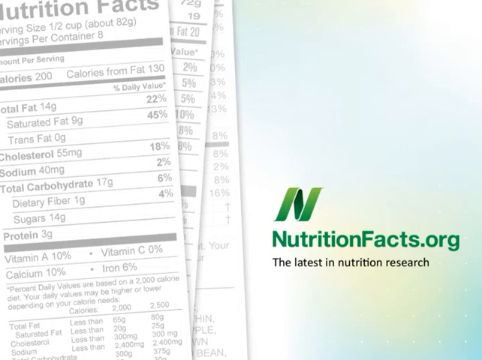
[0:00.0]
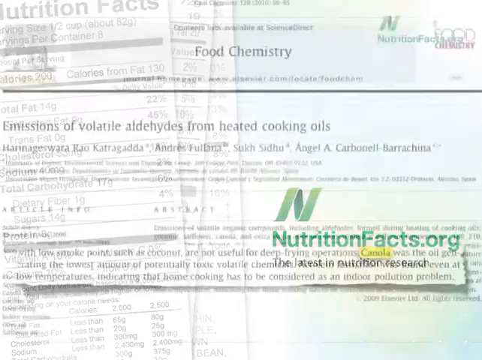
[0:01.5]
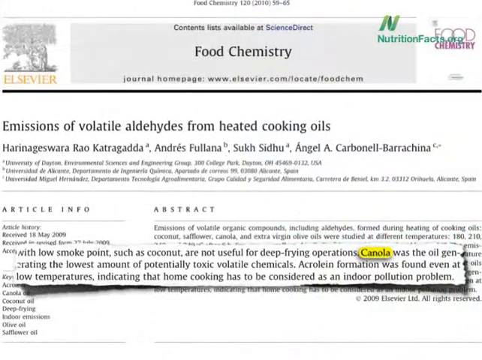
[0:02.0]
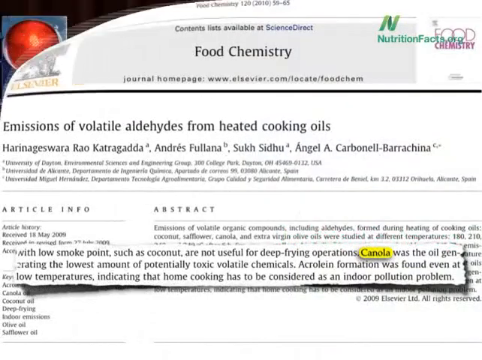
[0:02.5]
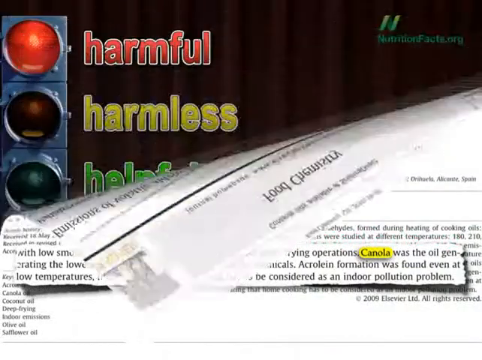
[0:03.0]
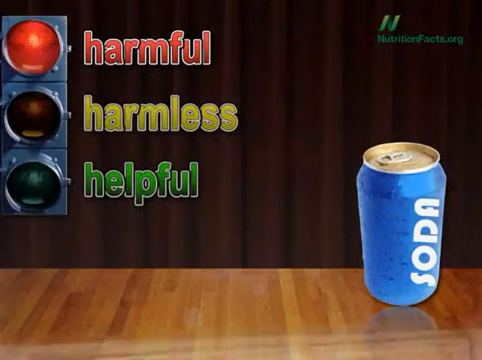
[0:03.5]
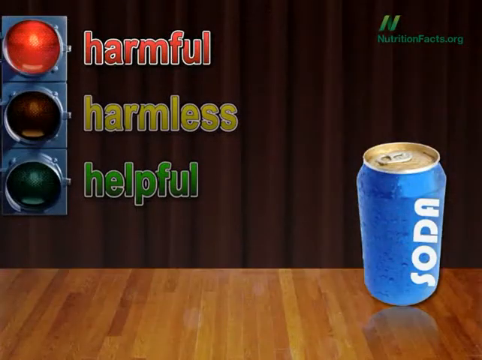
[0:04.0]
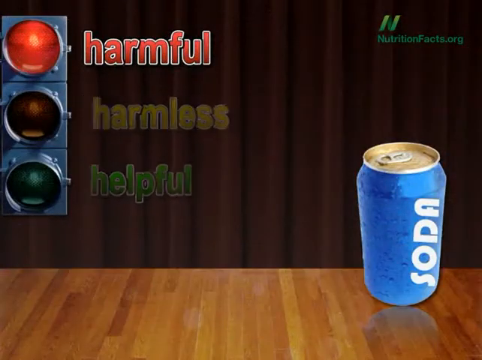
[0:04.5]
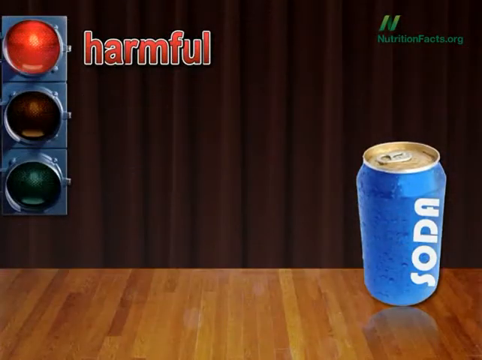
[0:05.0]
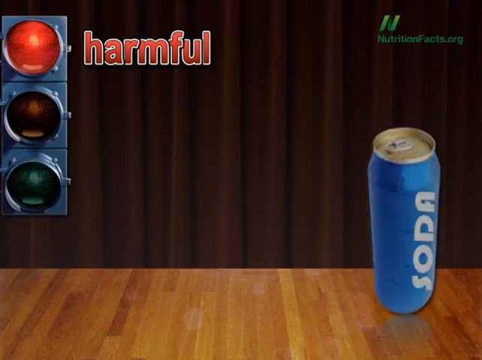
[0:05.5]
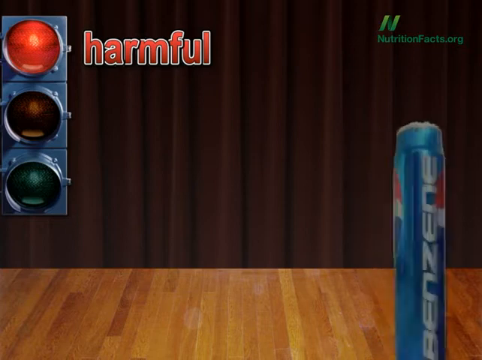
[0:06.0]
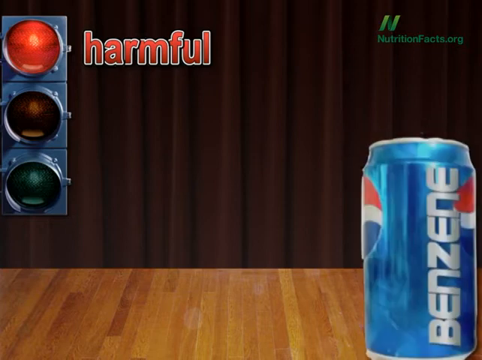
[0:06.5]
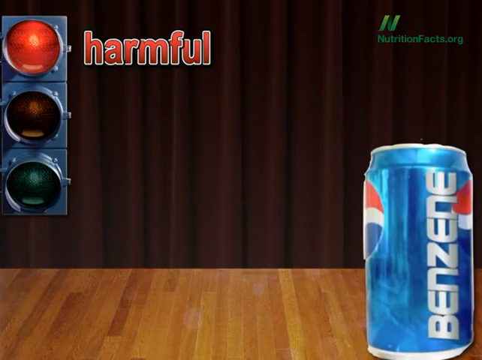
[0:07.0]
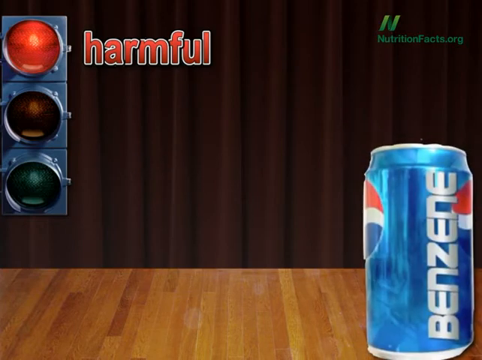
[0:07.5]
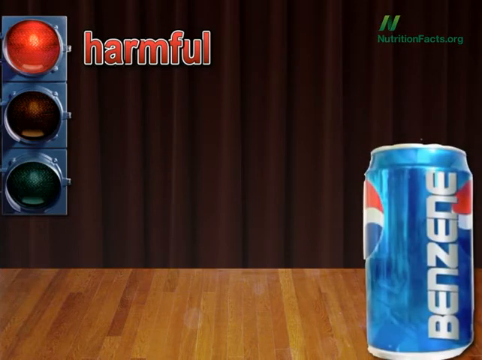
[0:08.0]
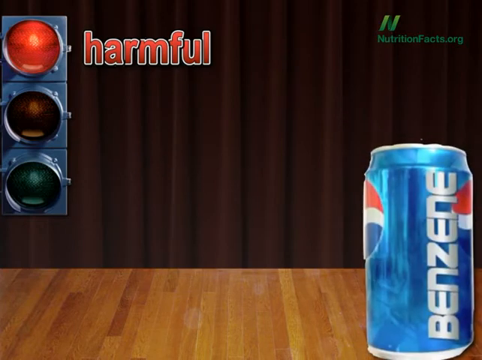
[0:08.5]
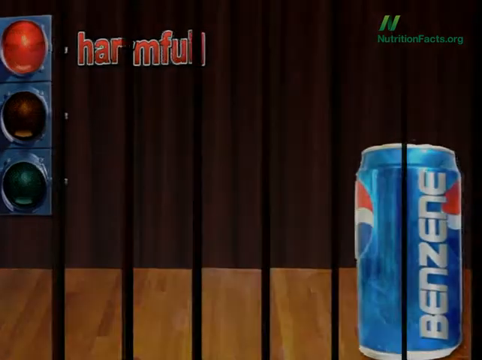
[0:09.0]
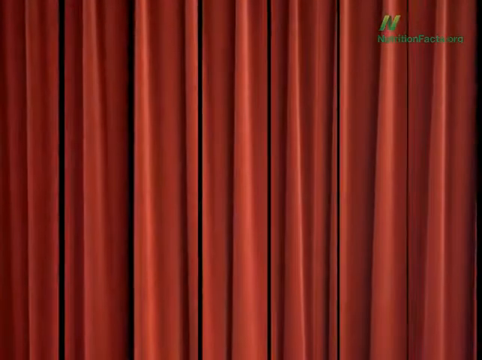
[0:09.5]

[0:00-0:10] The video opens with a title page reading "The Latest in Nutrition Research" from nutritionfacts.org, with a list of nutrition facts about food in grey on the left of the screen. An article about food chemistry then appears, titled "Emissions of Volatile Aldehydes from Heating Cooking Oils." A highlighted section at the bottom reads: "with low smoke, such as coconut, are not useful for deep frying operations. Canola was the oil generating the lowest amount of potentially toxic volatile chemicals. Acrolein formation was found even at low temperatures, indicating that home cooking has to be considered as an indoor pollution problem." The page folds over to show a traffic light on the left side of the screen with the red light showing and the caption "harmful" in red beside it. In the right corner of the screen, on top of a table, is a can of soda, so the red traffic light indicates that the soda is harmful. The can rotates to reveal a blue can of benzene, and then red curtains appear across the page.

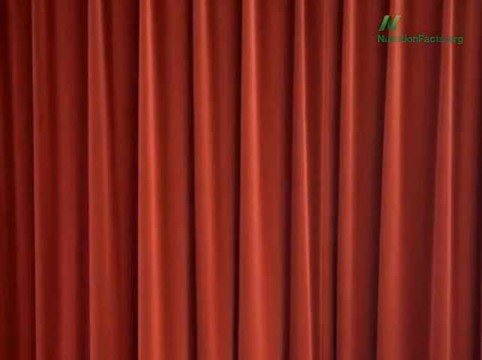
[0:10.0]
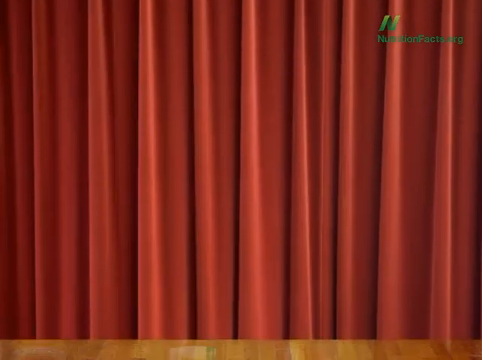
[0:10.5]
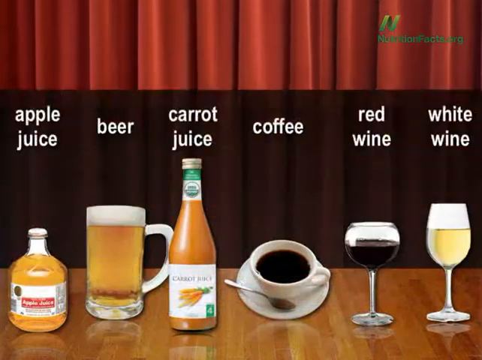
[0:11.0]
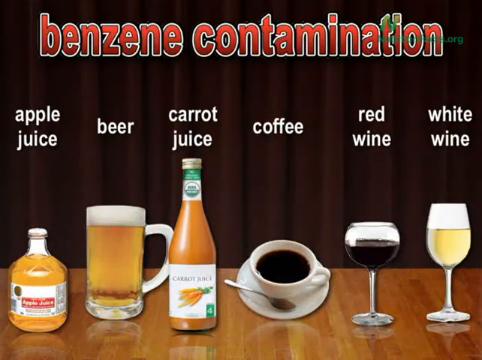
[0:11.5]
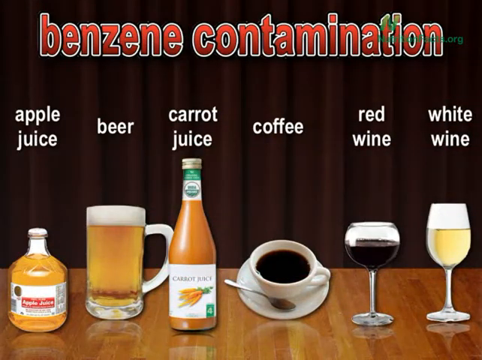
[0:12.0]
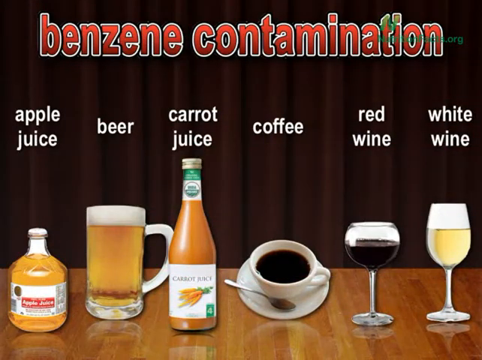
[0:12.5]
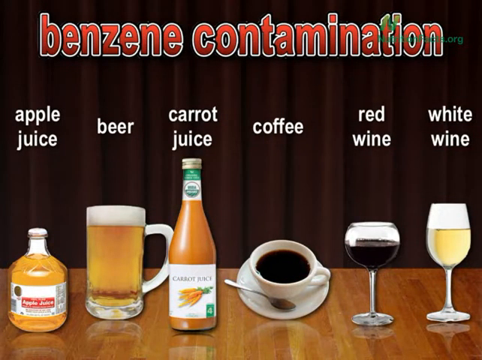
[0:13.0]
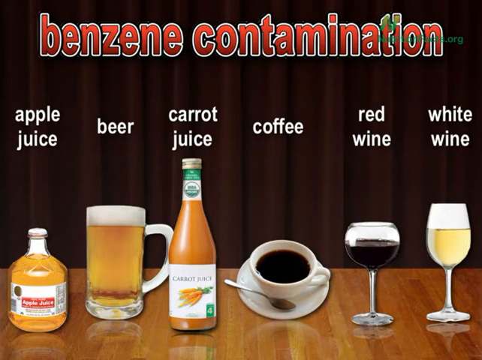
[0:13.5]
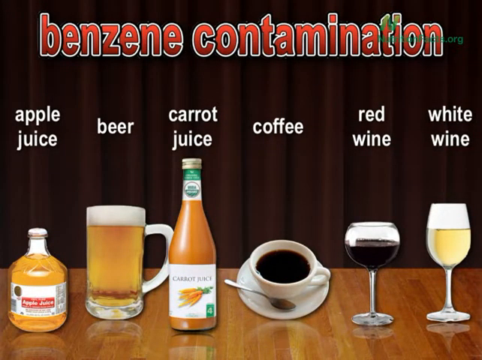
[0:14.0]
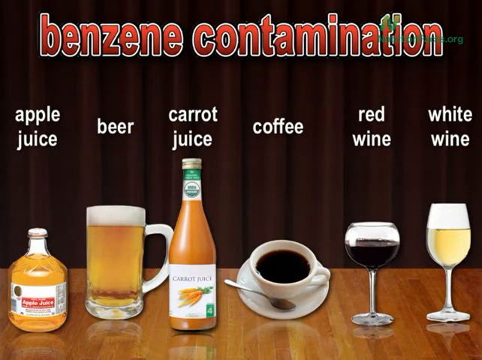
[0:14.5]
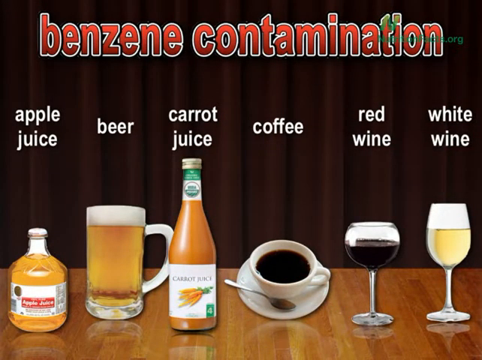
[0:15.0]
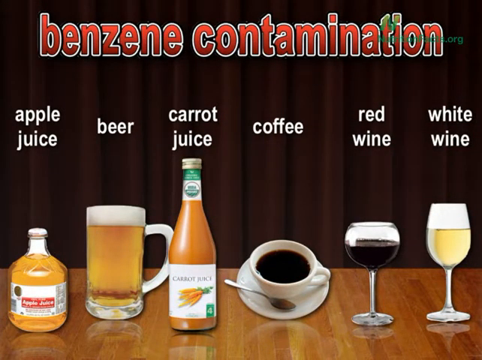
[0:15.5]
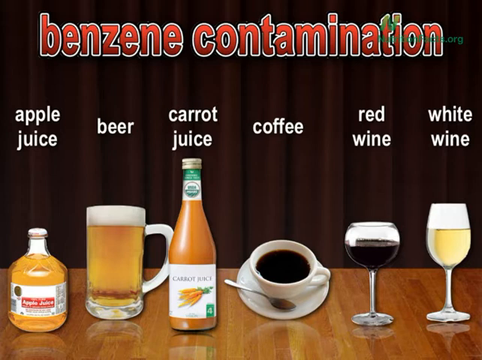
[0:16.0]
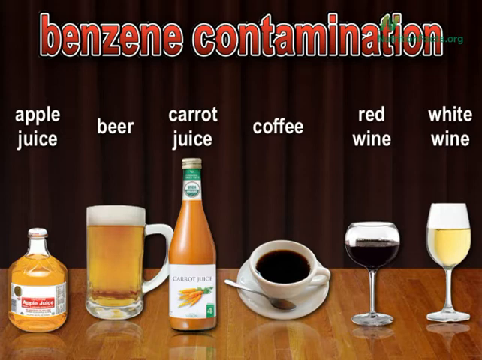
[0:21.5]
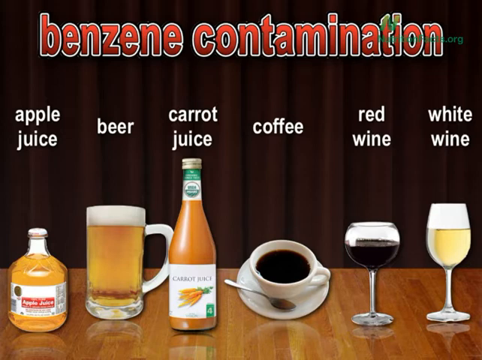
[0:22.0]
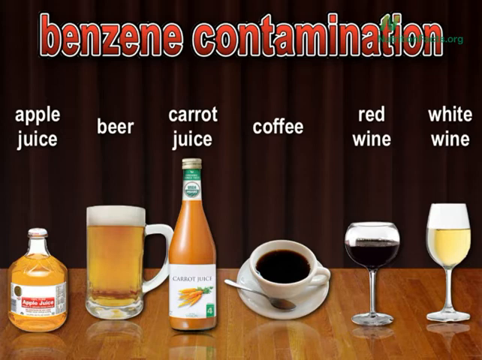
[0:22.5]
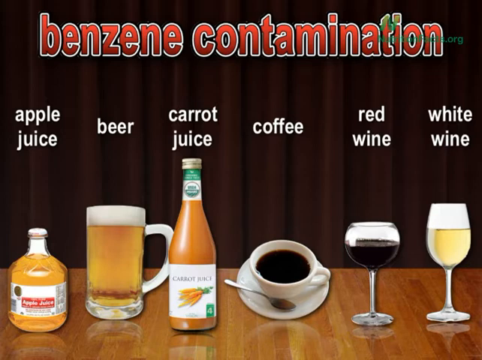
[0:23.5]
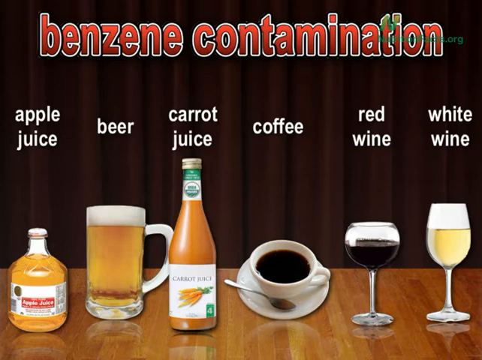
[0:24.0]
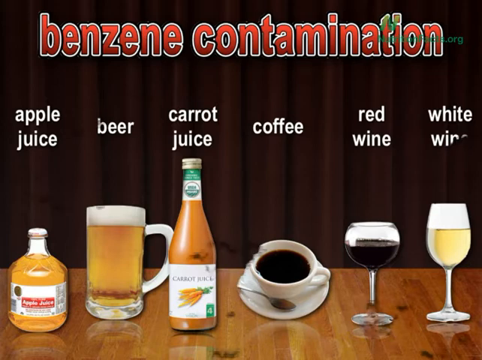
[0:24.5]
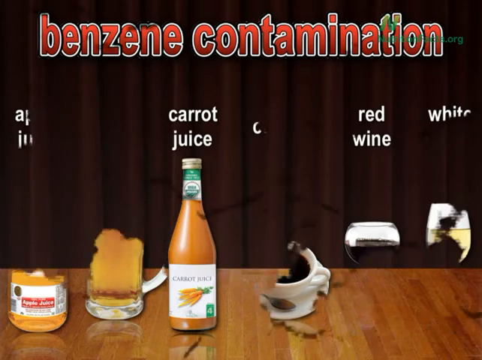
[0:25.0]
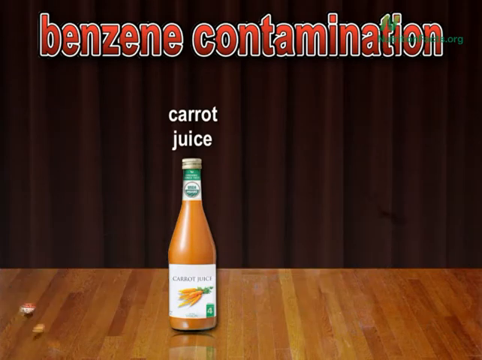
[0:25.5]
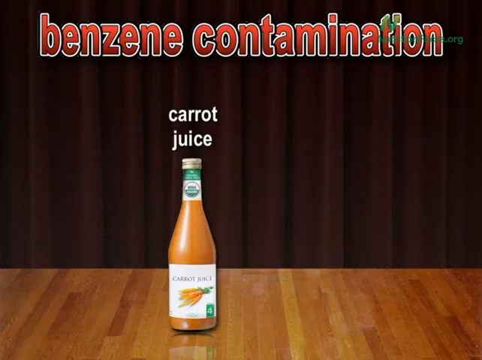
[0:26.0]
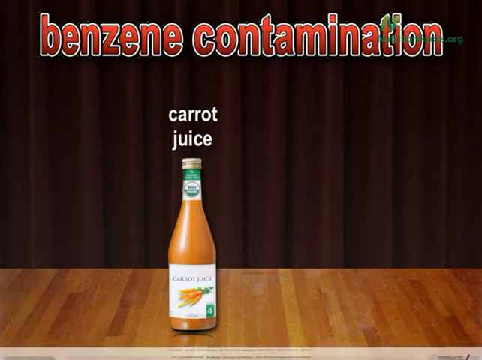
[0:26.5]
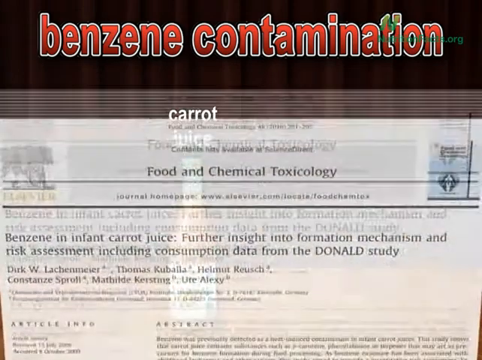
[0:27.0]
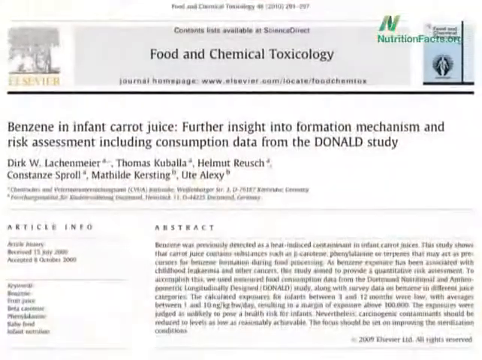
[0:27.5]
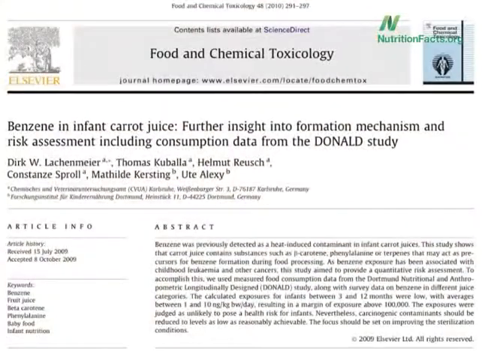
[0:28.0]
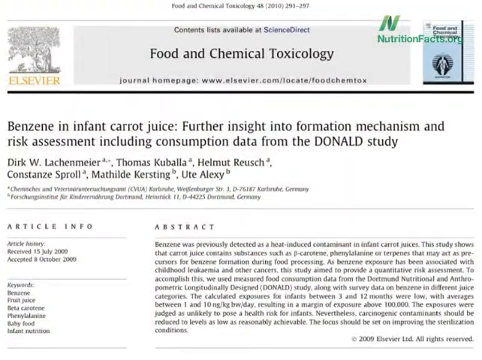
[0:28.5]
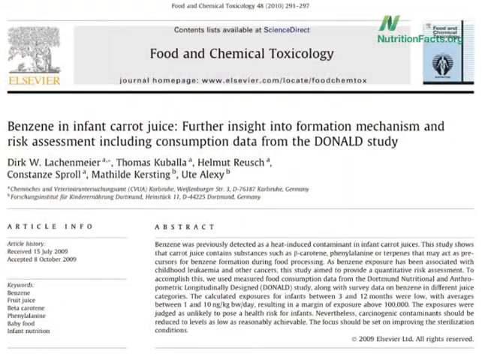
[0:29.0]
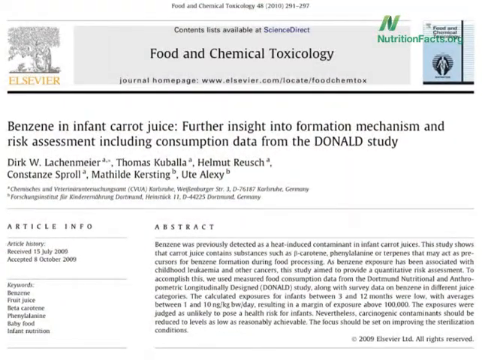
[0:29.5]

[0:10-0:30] A red curtain pulls up from the bottom to the top, revealing a tabletop with a jar of apple juice, a pint of beer, a bottle of carrot juice, a cup of coffee, a glass of red wine and a glass of white wine under the title "Benzene Contamination," implying that all of these items contain benzene. The screen changes to the same title, "Benzene Contamination," with only a bottle of carrot juice on the tabletop; its label has an image of a bunch of carrots. Another article appears, relating to food and chemical toxicology, titled "Benzene in infant carrot juice. Further insight into formation mechanism and risk assessment including consumption data from the Donald study." The abstract reads: "benzene was previously detected as a heat-induced contaminant in infant carrot juices. As benzene exposures have been associated with child leukemia and other cancers, this study aimed to provide a quantitative risk assessment."